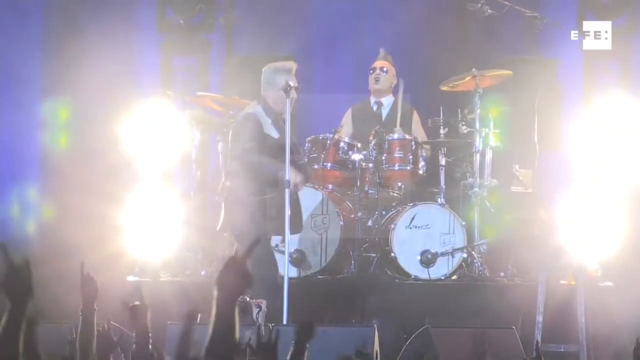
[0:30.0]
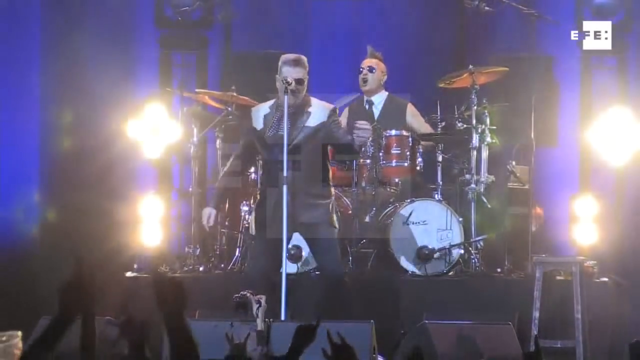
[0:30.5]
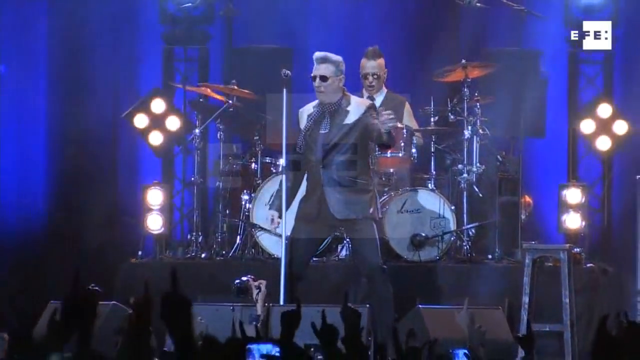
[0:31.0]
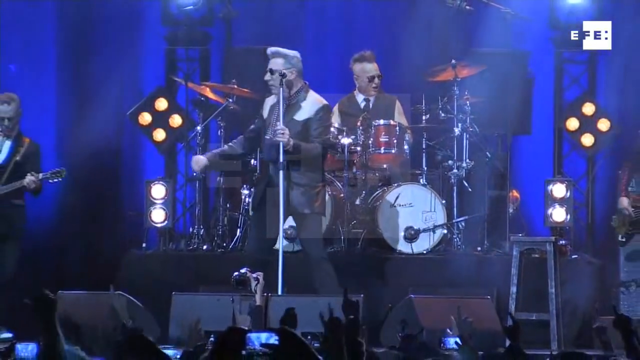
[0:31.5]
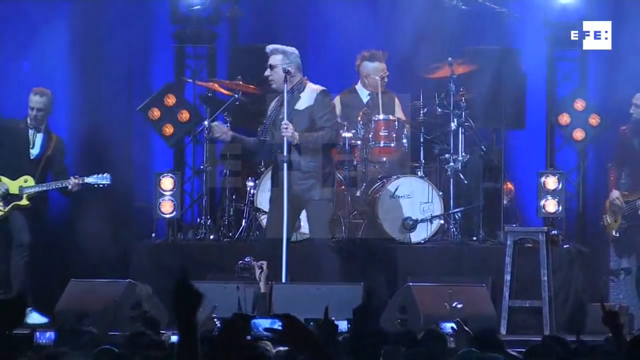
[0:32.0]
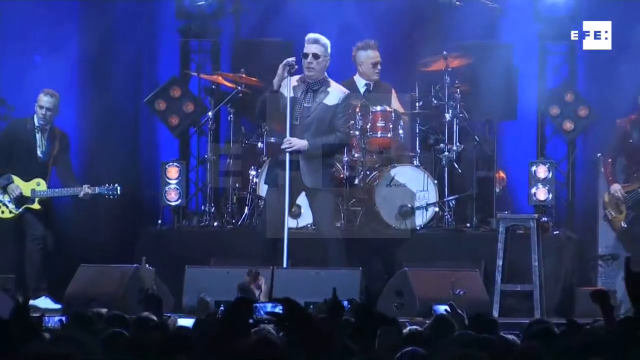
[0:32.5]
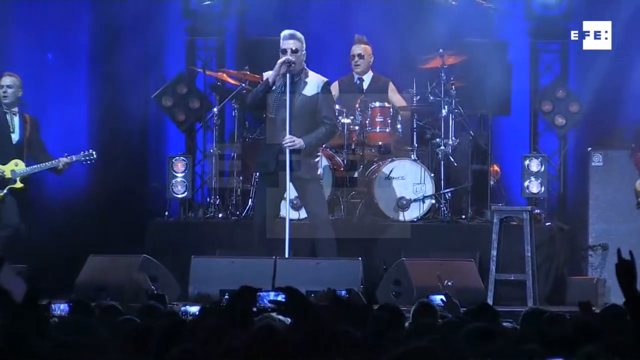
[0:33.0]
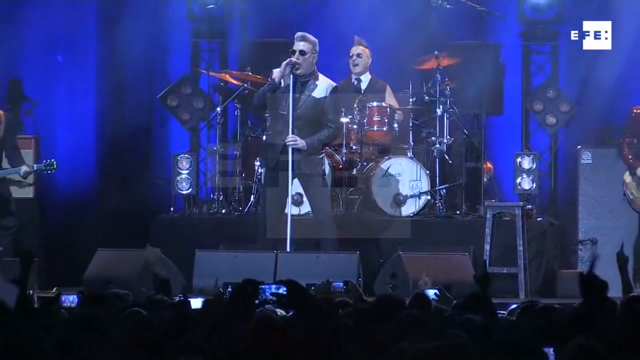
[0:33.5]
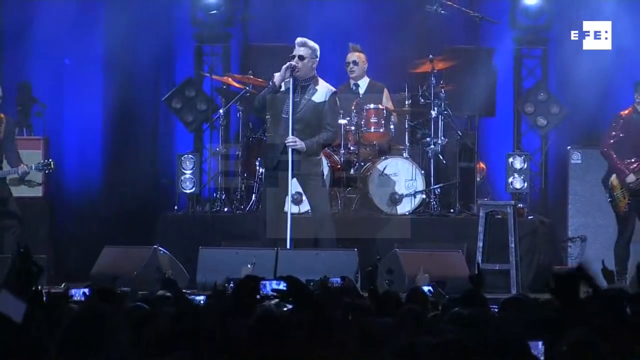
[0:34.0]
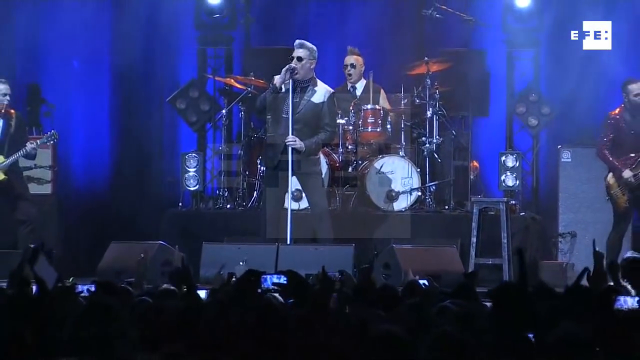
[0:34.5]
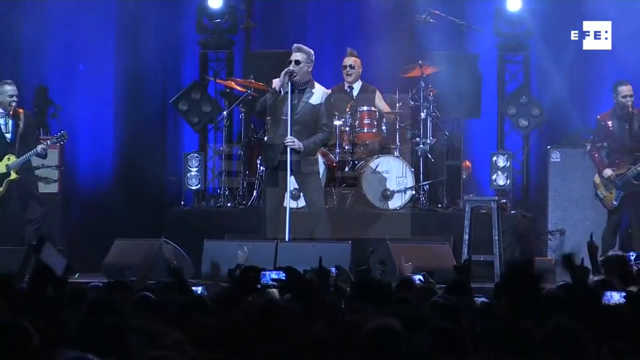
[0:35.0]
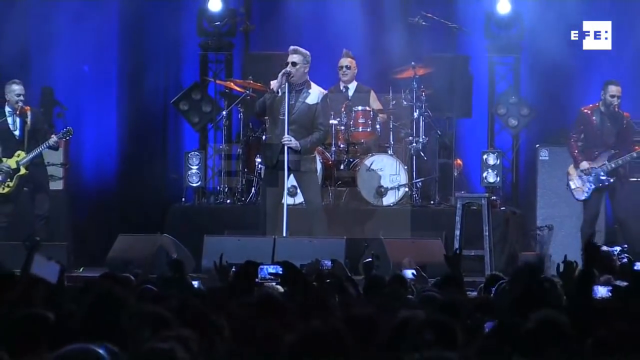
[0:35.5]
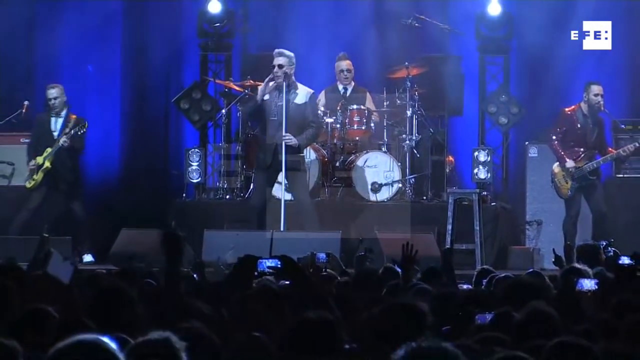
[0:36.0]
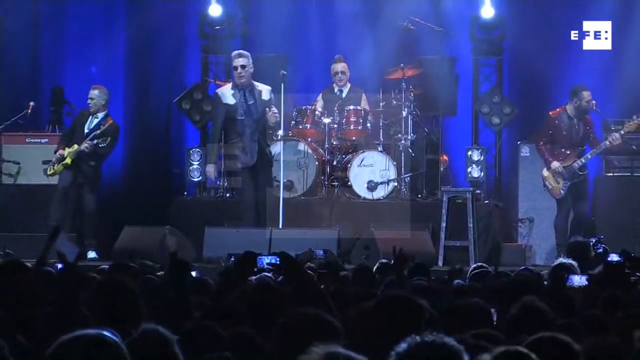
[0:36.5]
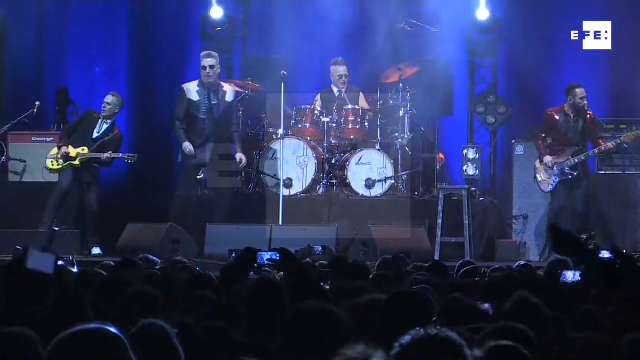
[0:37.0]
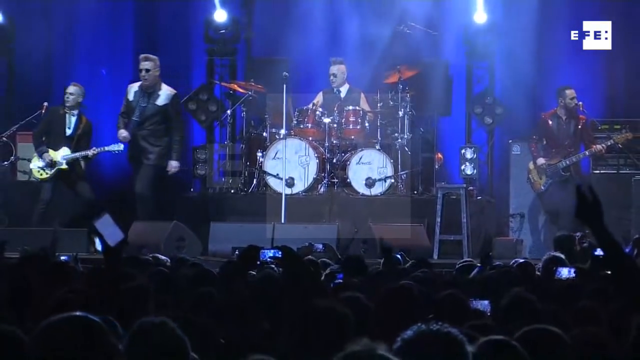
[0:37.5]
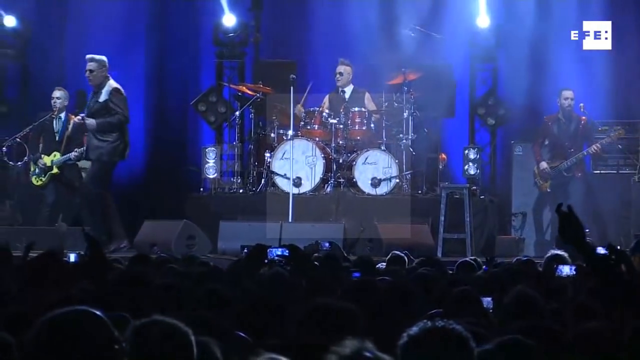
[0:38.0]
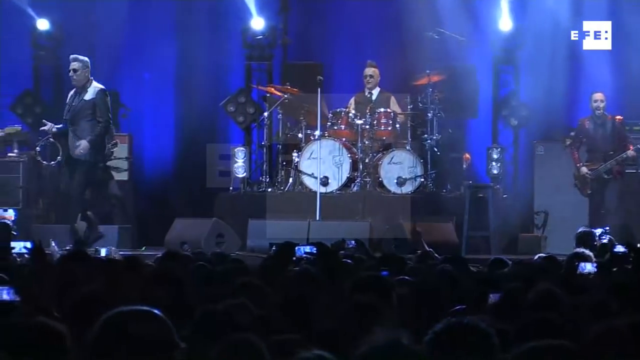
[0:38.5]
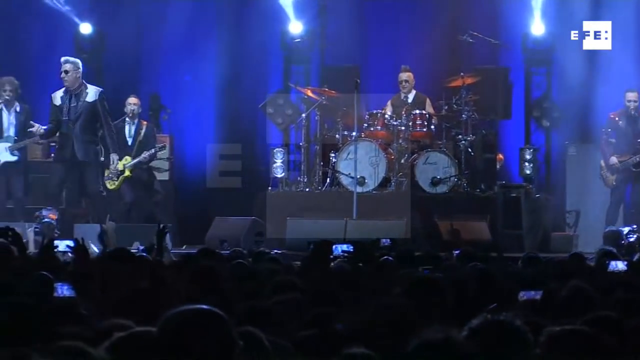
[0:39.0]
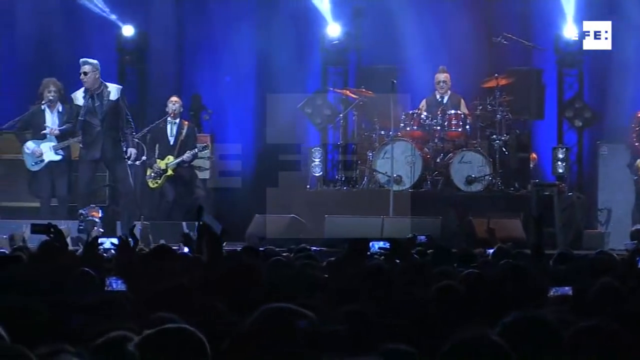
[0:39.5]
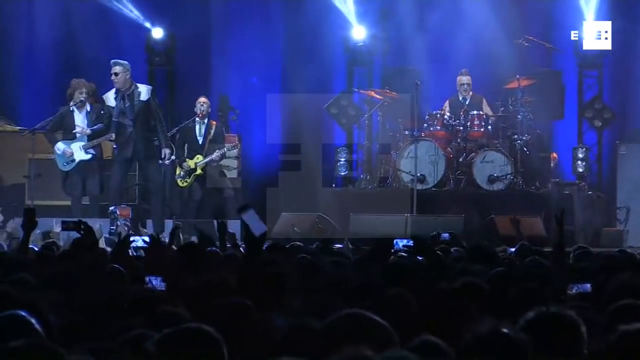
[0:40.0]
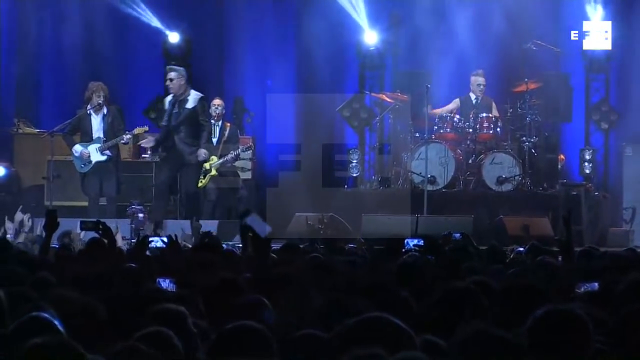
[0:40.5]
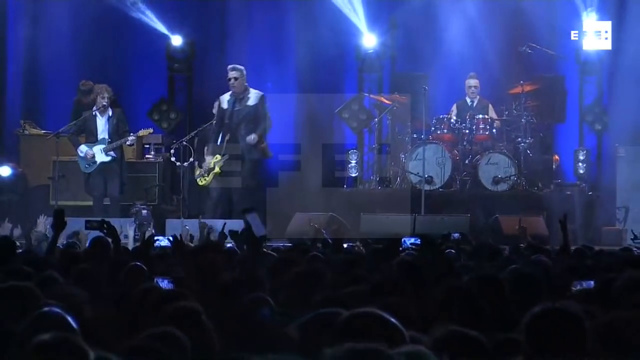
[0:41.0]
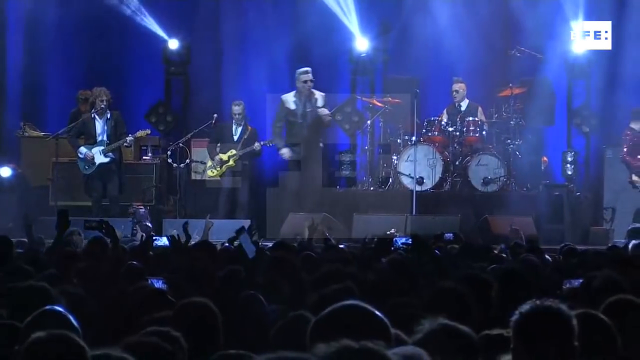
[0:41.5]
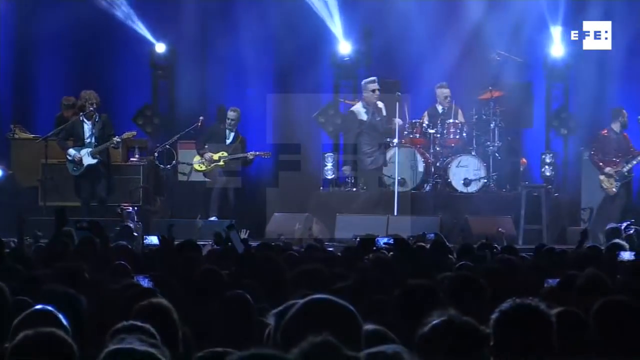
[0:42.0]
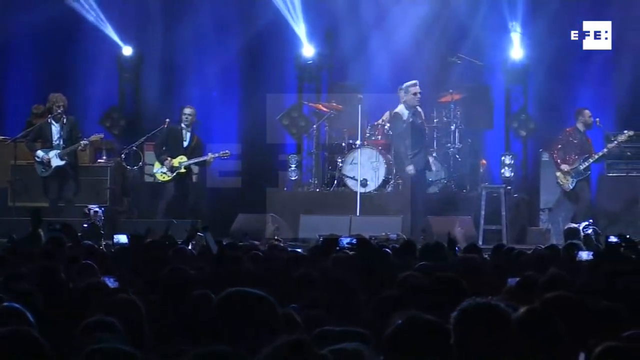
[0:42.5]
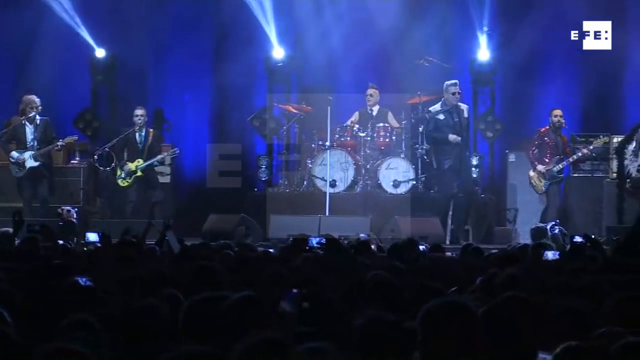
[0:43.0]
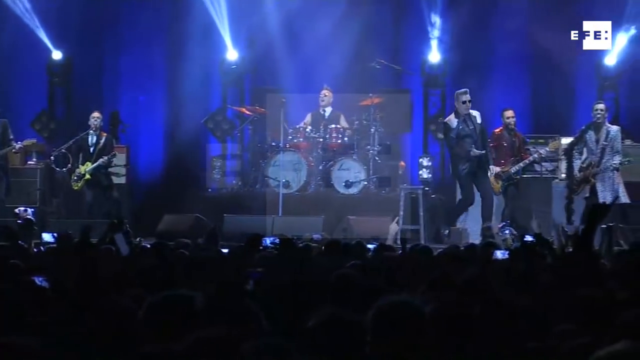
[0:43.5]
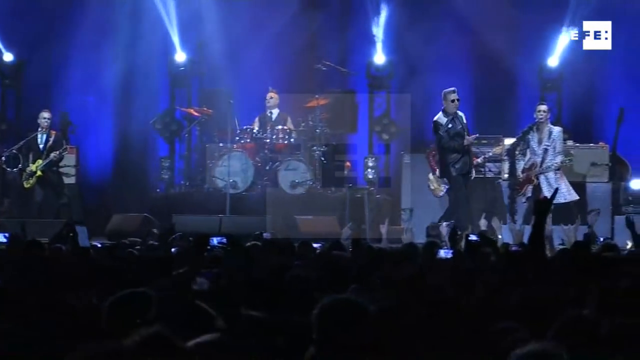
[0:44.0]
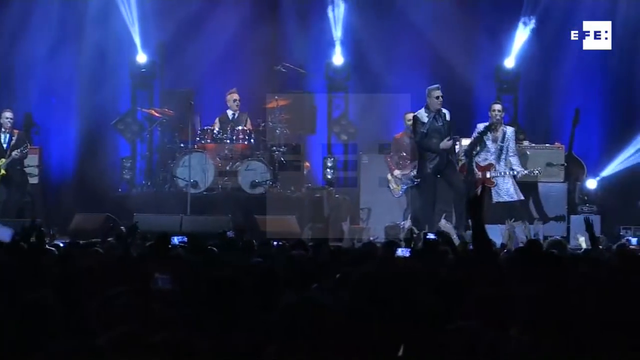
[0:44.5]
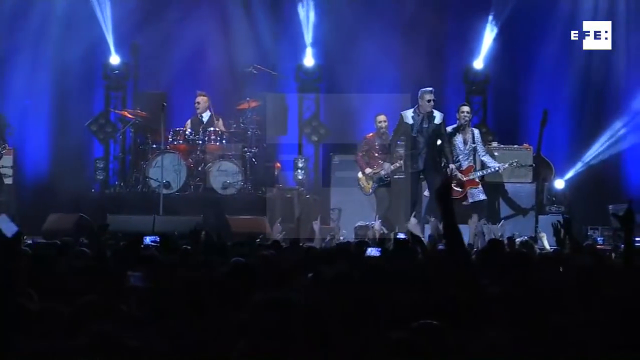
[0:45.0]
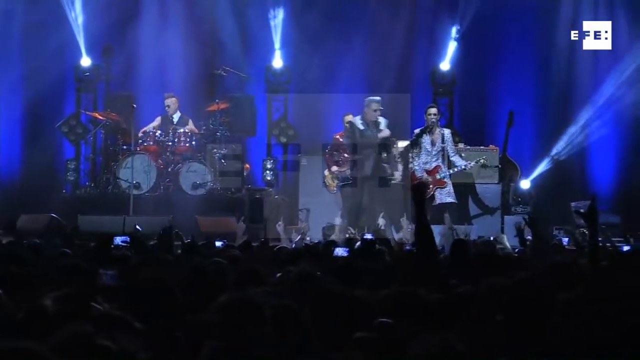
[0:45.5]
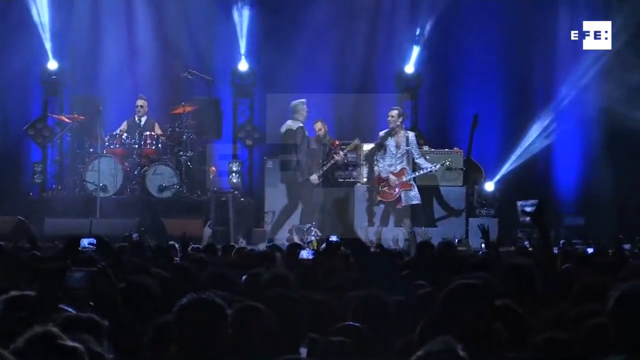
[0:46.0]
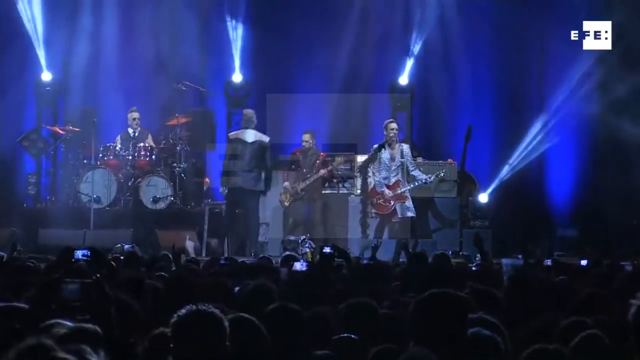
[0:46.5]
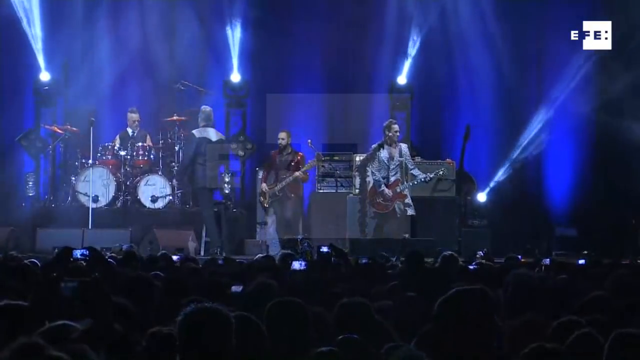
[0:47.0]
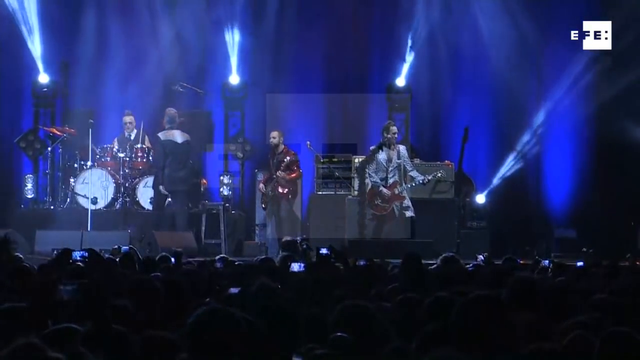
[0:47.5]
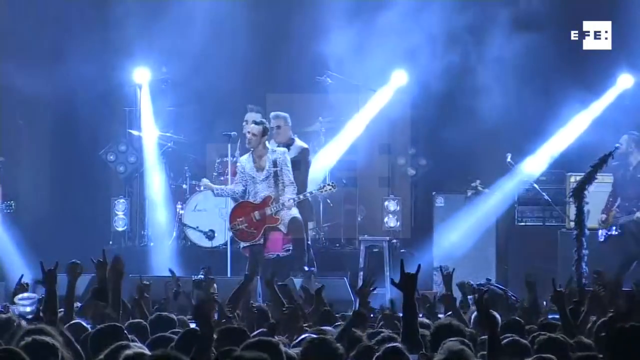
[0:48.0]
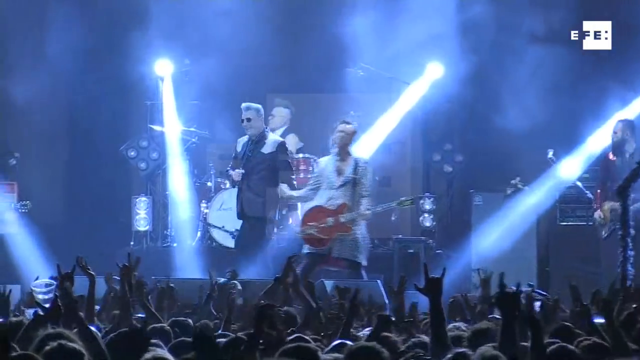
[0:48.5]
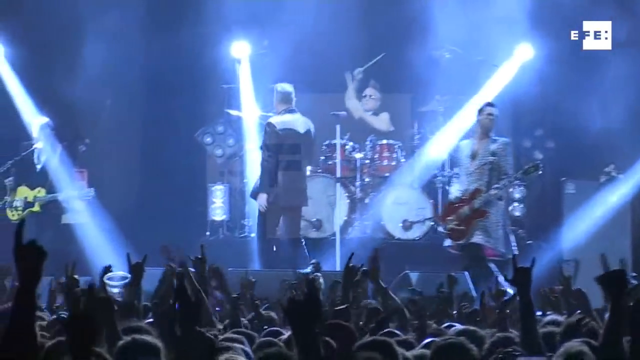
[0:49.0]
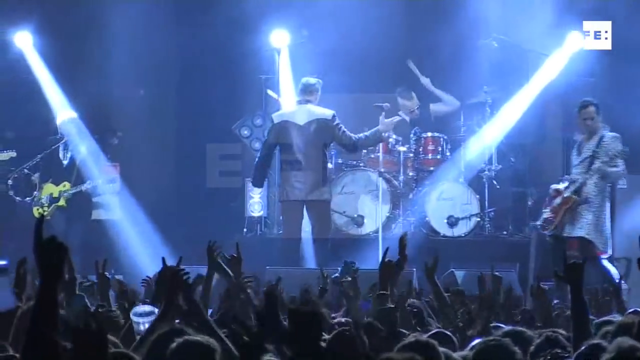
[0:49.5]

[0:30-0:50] In the middle of the stage, up on a small black platform, is a red drum set with white drum heads on the two bass drums. Behind it a man sits wearing a sleeveless white button-up collared shirt with a black tie, a black sleeveless vest over it, and black sunglasses; he has spiky hair. In front of him is a microphone stand, and a man stands behind it singing into it. He wears a black suit jacket that looks like leather with white patches on the shoulders, has spiky hair and wears black sunglasses. On the left side of the stage is a man in a suit jacket and white shirt holding a yellow guitar, and on the right side is a man in a black shirt and maroon suit jacket holding a dark brown guitar. The heads of the people listening to the band are visible in front. Behind the band, lights are set up on three separate posts, with a light at the top and one in the middle of each post, and behind that is a blue curtain.